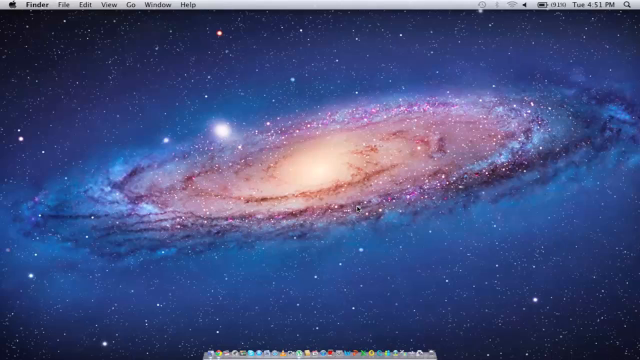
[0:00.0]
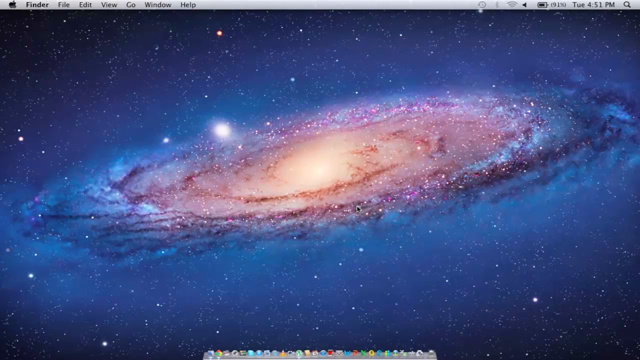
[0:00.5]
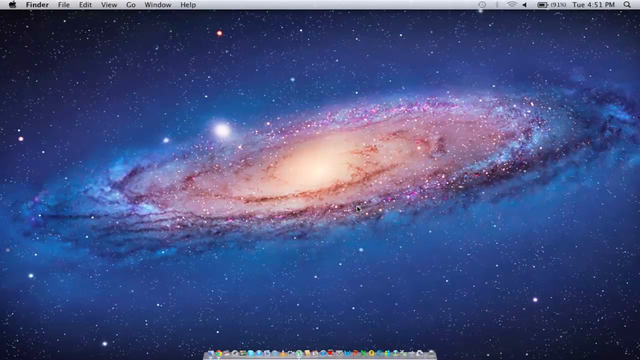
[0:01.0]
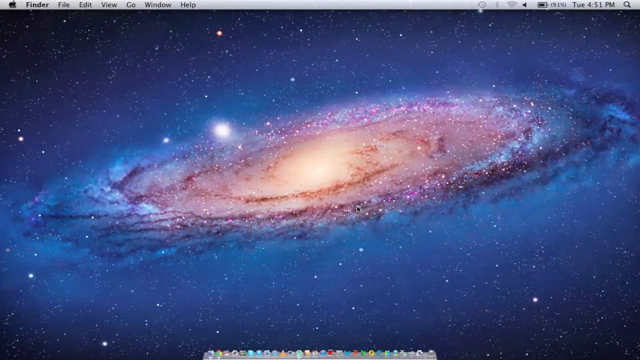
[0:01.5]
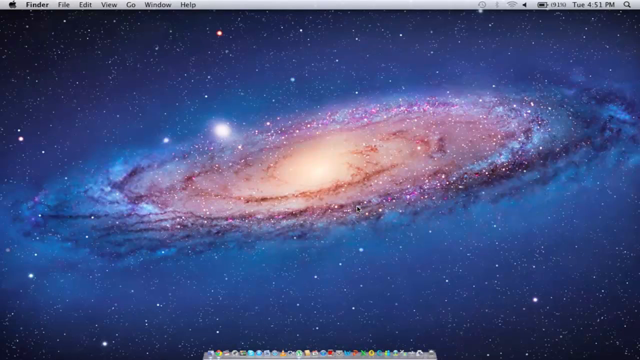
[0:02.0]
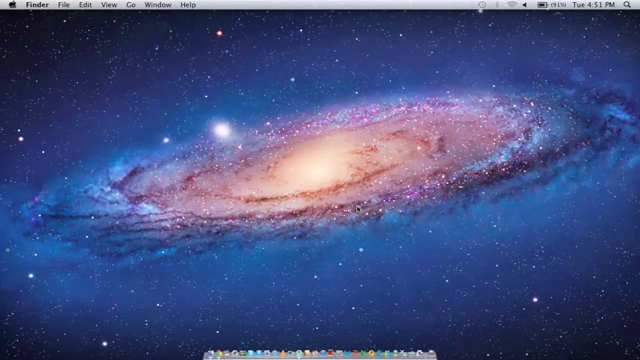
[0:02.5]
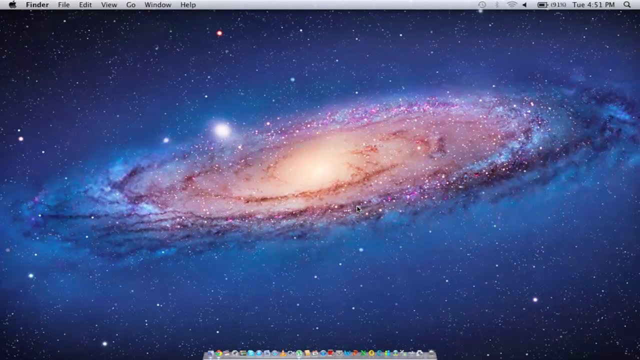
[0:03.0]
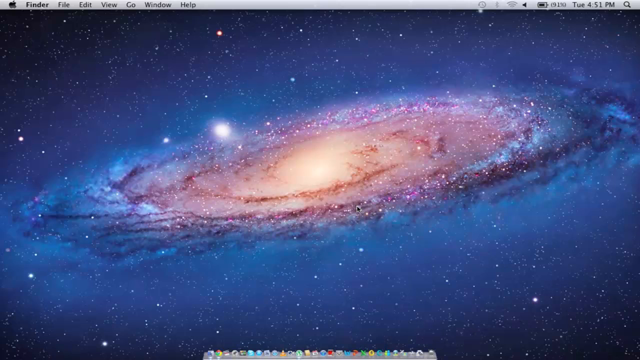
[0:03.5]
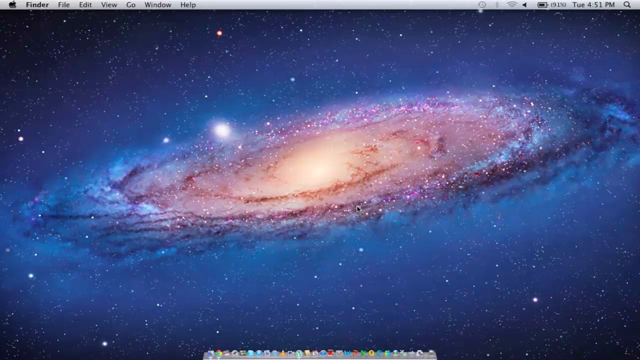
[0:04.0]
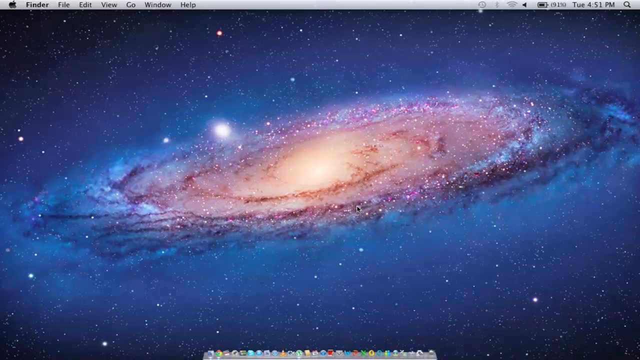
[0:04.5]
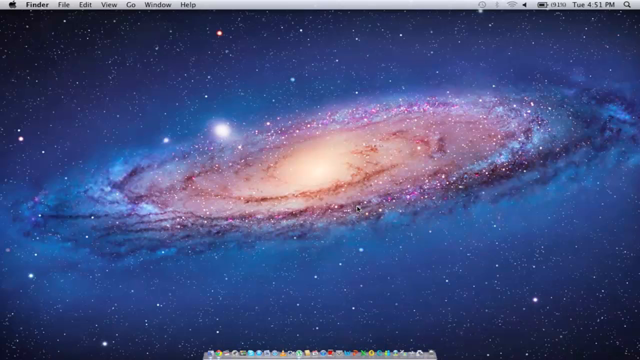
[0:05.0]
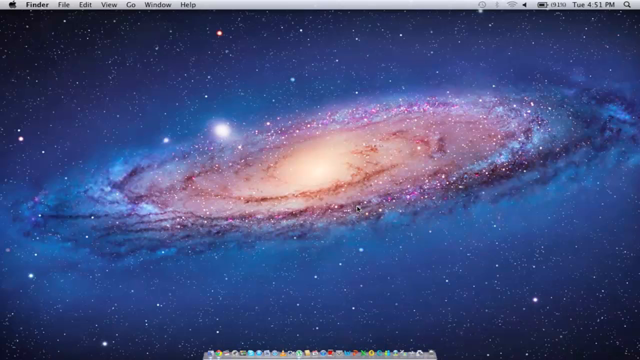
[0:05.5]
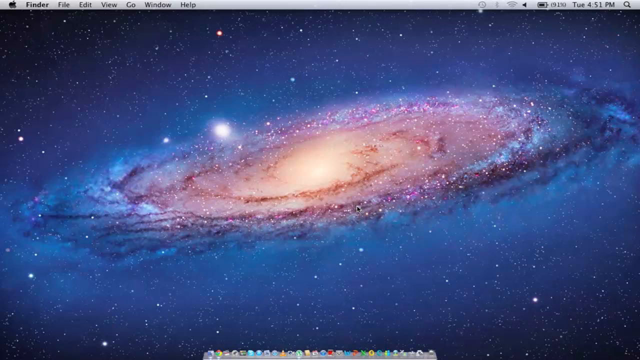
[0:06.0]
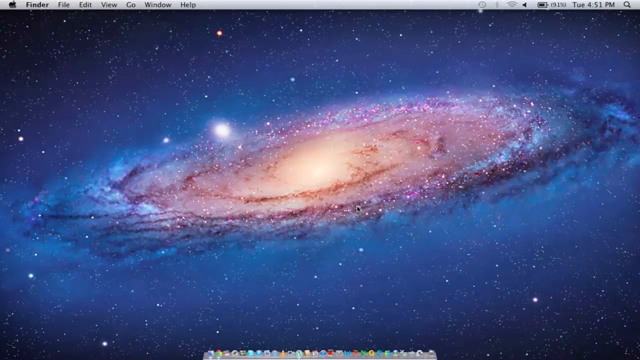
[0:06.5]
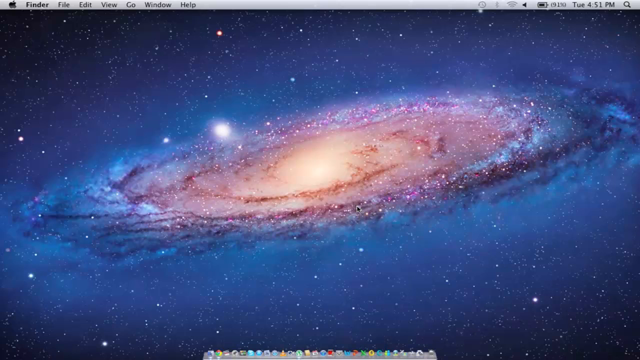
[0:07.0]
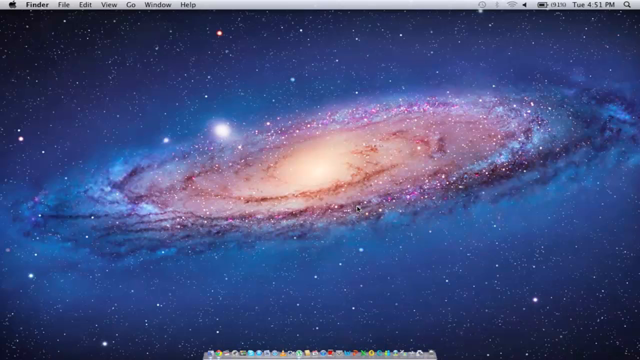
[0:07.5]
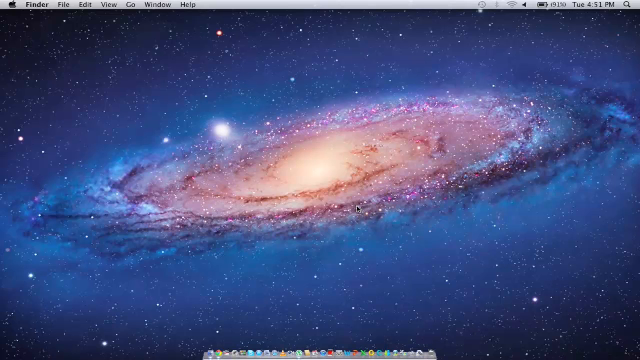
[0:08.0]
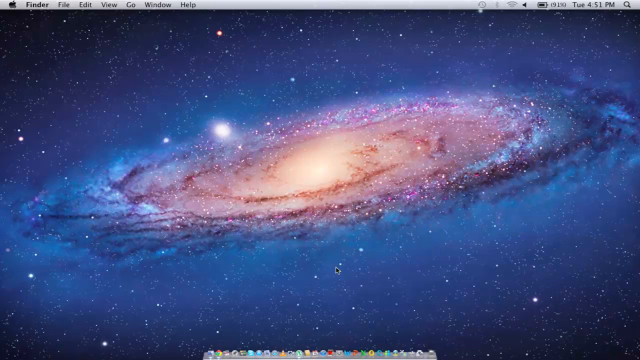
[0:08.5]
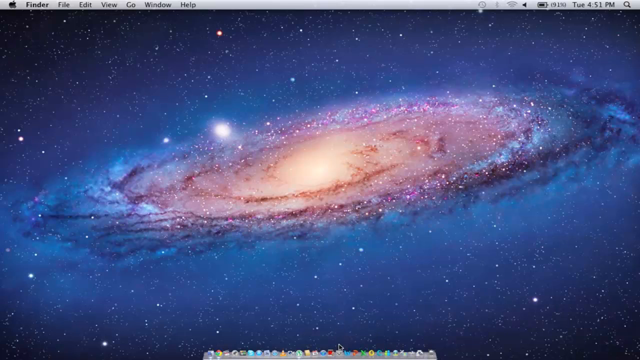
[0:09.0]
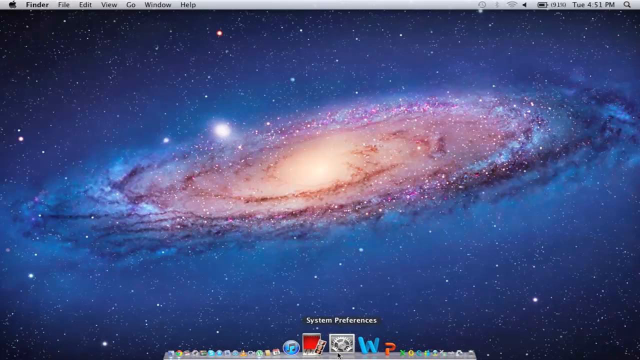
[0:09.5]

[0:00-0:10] An image appears that looks like something like a volcano, with something melting. At the bottom there seem to be Windows icons, so it appears to be an image or screen of a Windows computer, desktop or laptop. Something seems to be burning and melting, and the middle of the image is very shiny. A light in the centre looks more like a volcano or an eclipse.